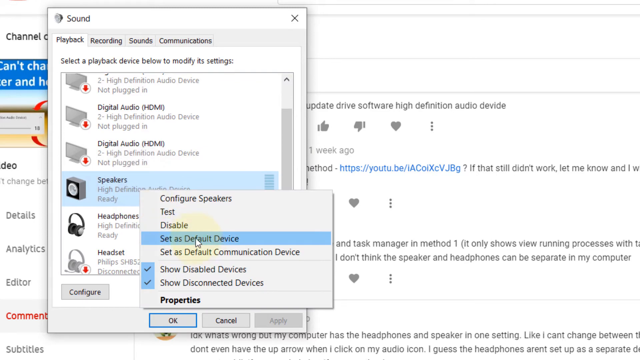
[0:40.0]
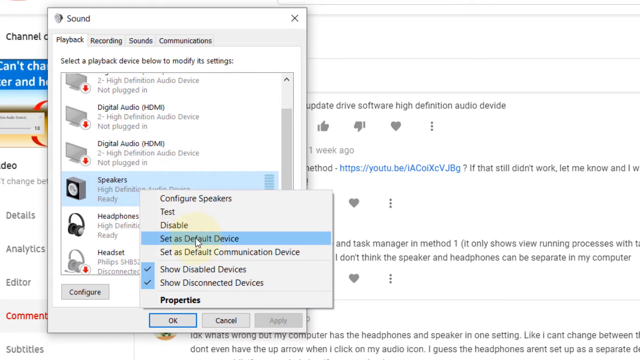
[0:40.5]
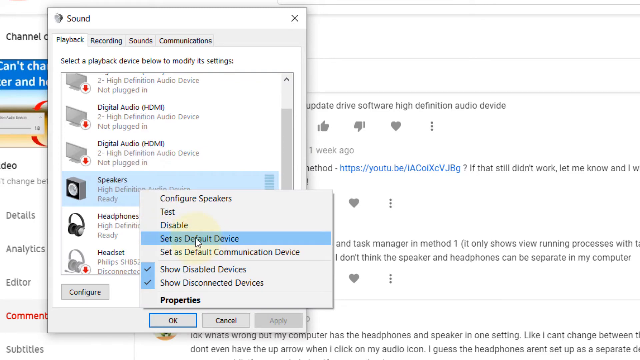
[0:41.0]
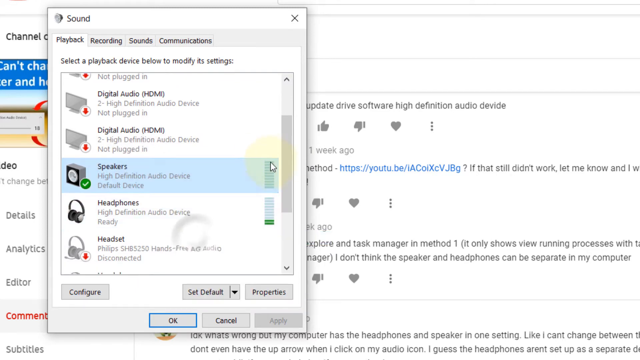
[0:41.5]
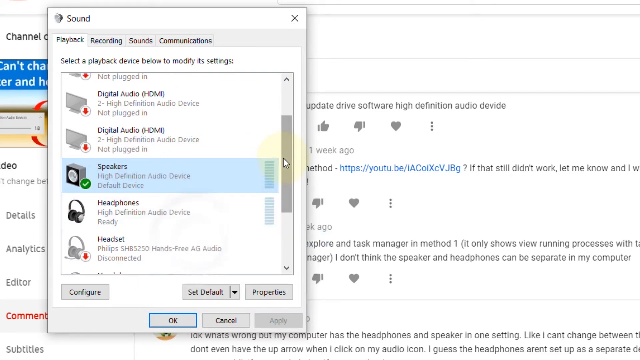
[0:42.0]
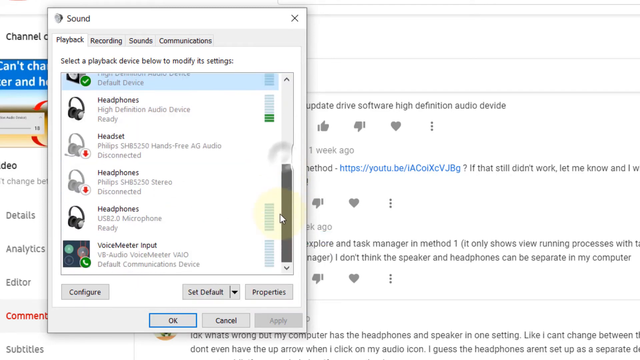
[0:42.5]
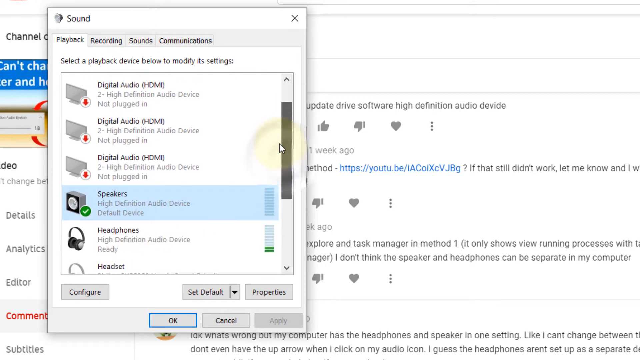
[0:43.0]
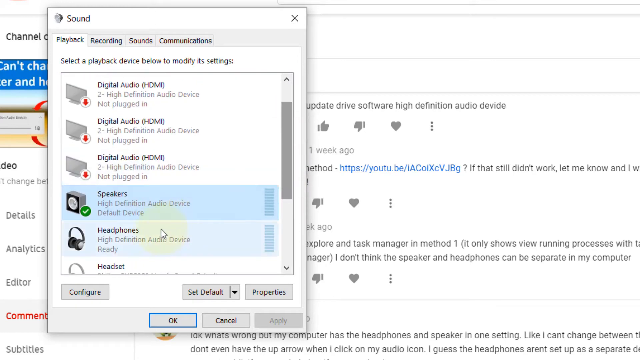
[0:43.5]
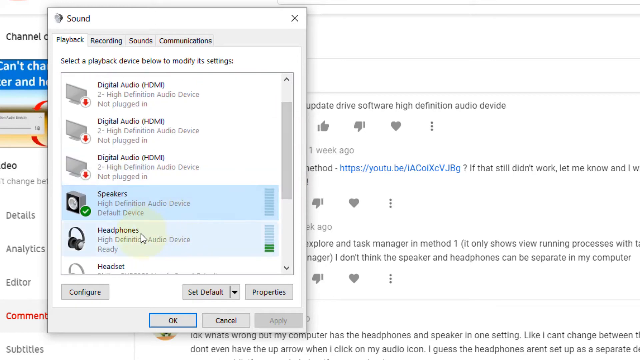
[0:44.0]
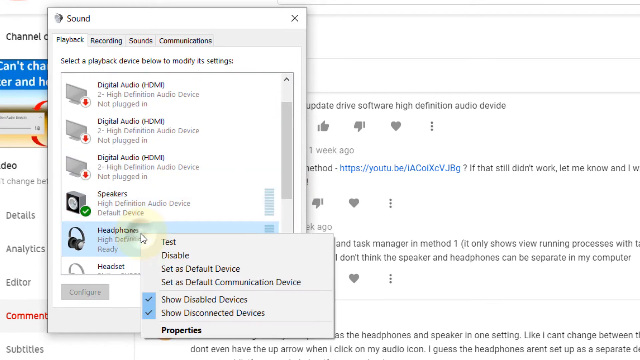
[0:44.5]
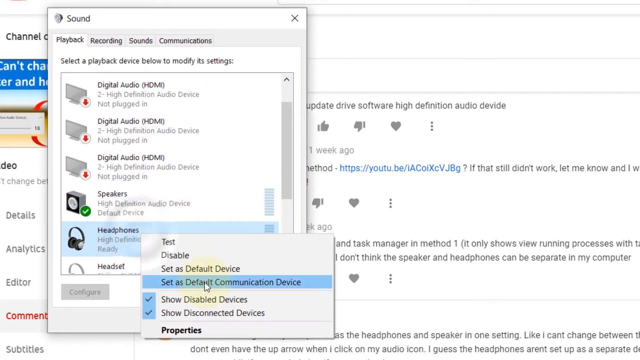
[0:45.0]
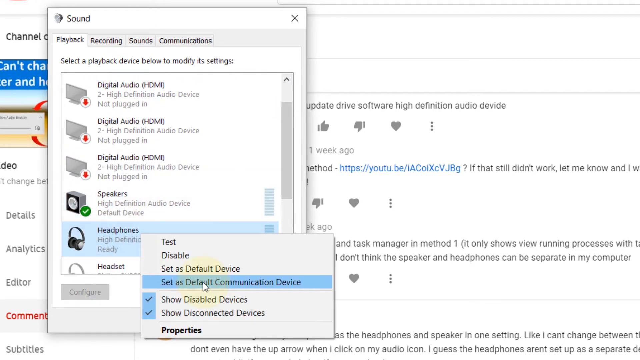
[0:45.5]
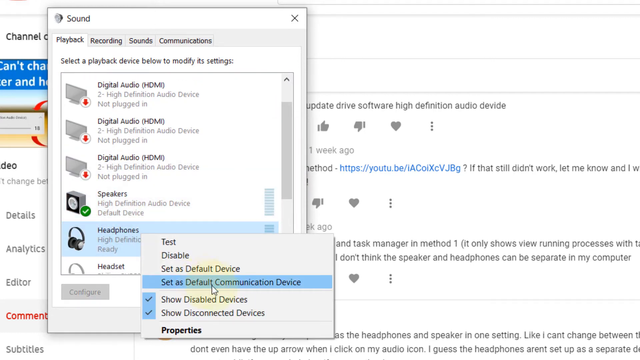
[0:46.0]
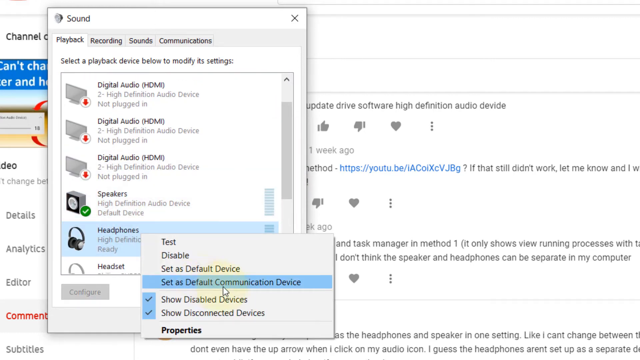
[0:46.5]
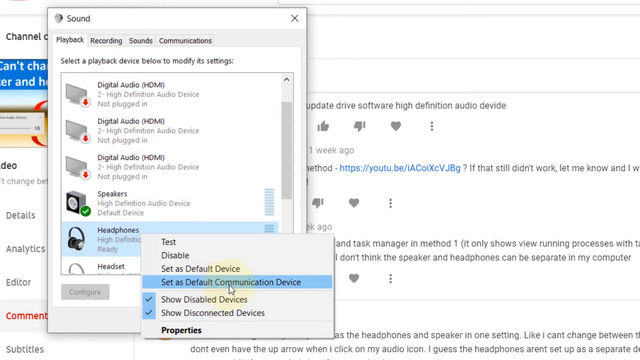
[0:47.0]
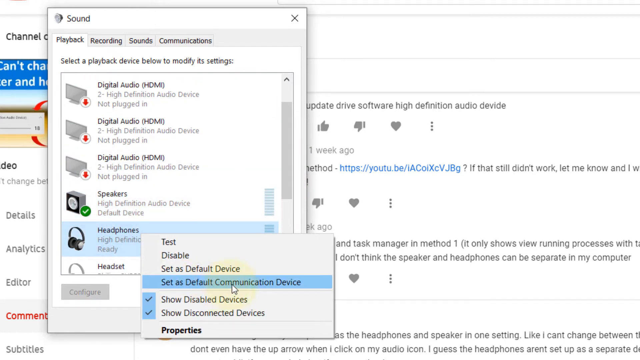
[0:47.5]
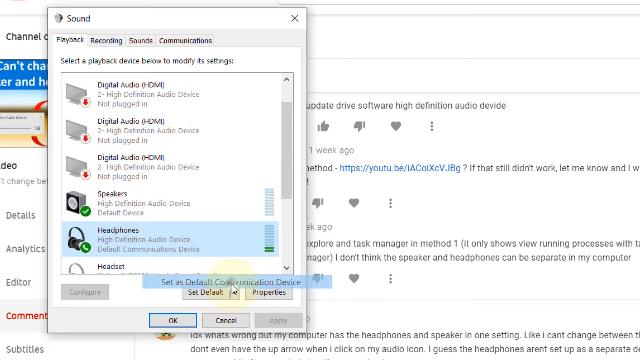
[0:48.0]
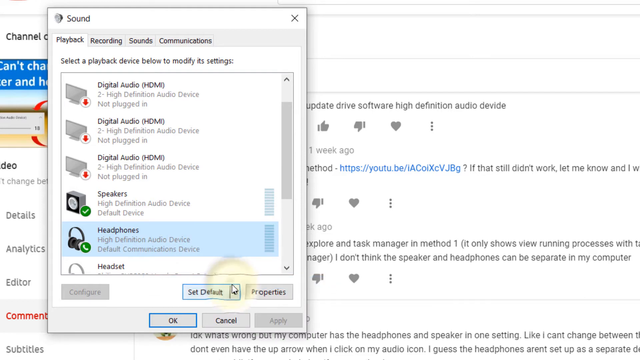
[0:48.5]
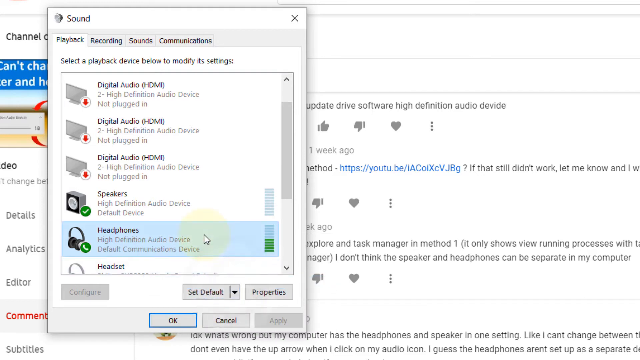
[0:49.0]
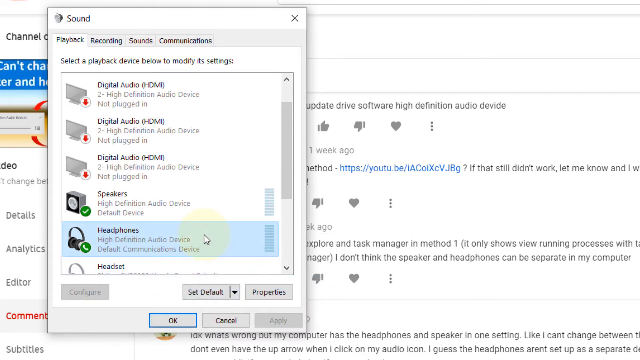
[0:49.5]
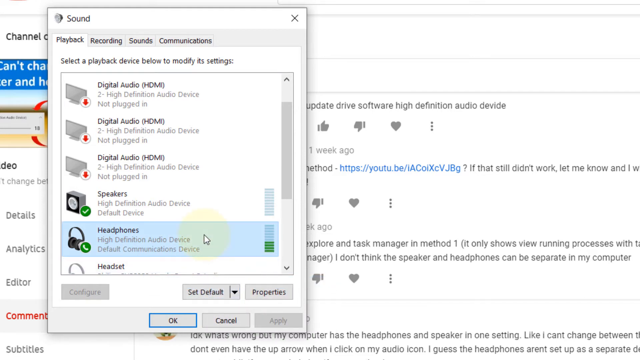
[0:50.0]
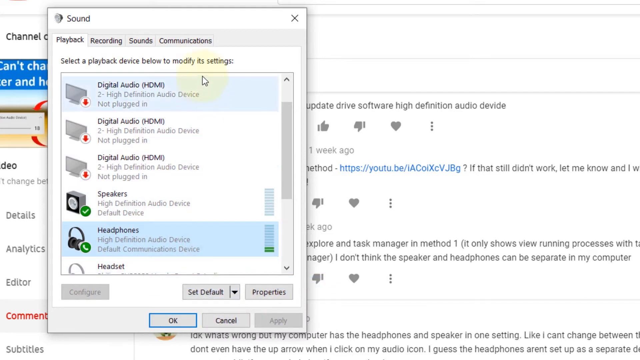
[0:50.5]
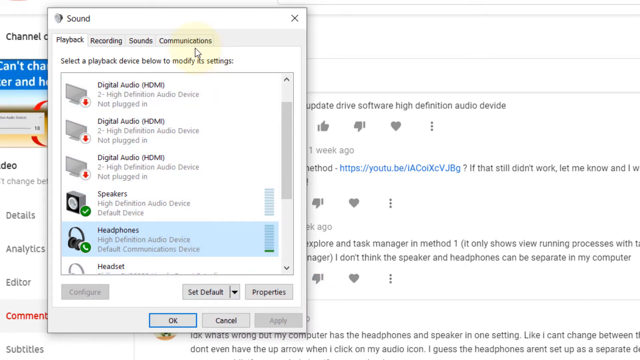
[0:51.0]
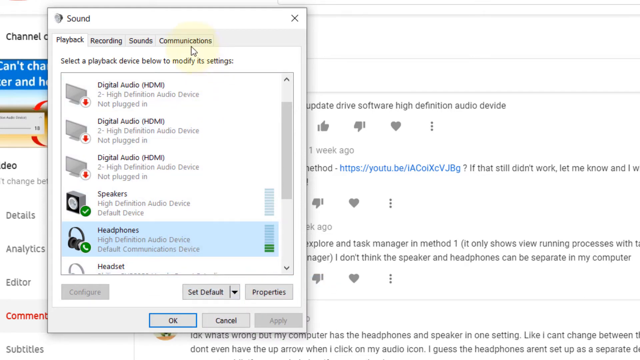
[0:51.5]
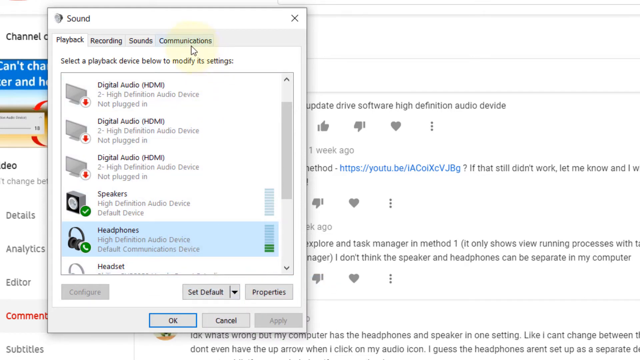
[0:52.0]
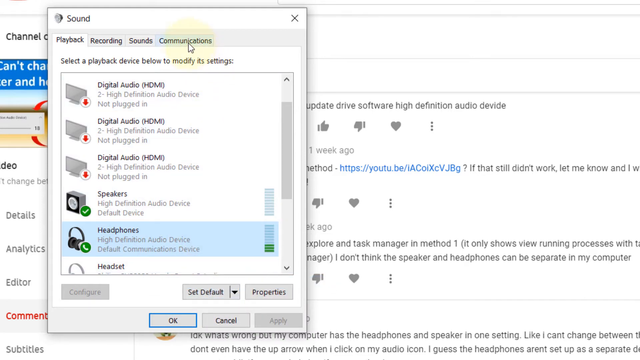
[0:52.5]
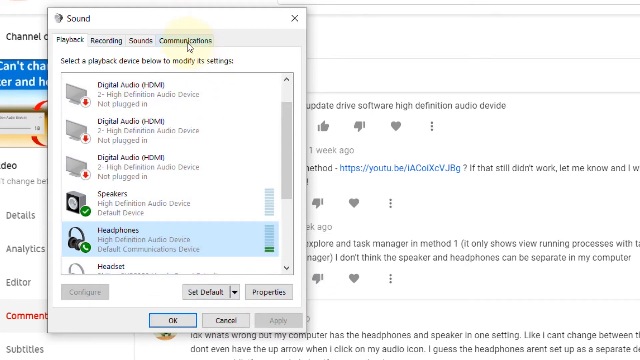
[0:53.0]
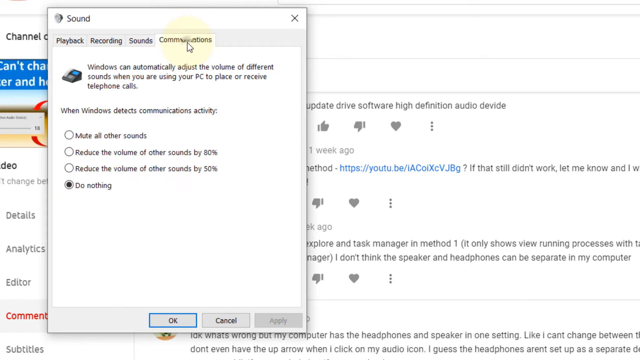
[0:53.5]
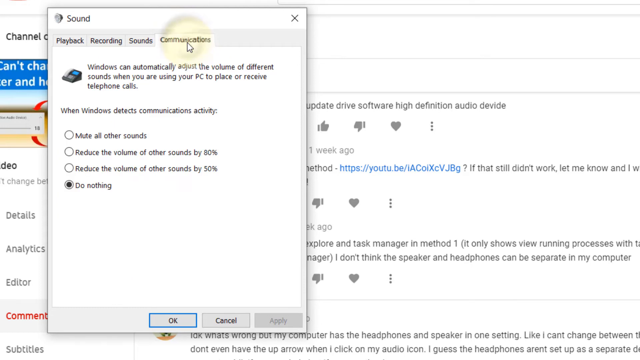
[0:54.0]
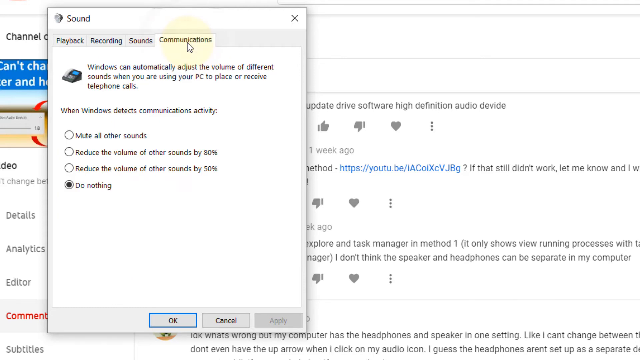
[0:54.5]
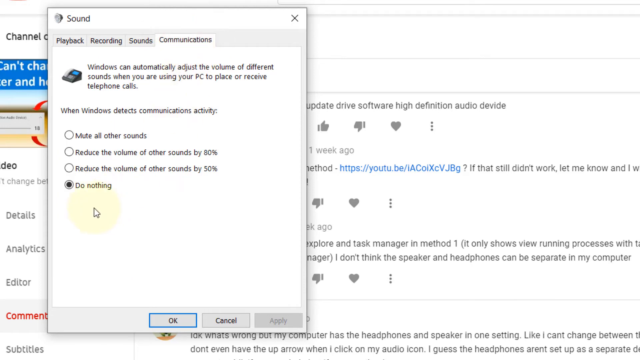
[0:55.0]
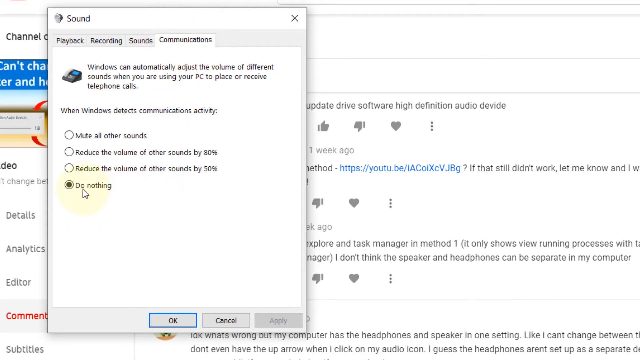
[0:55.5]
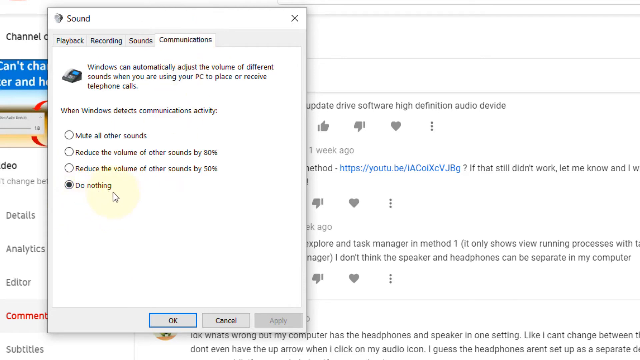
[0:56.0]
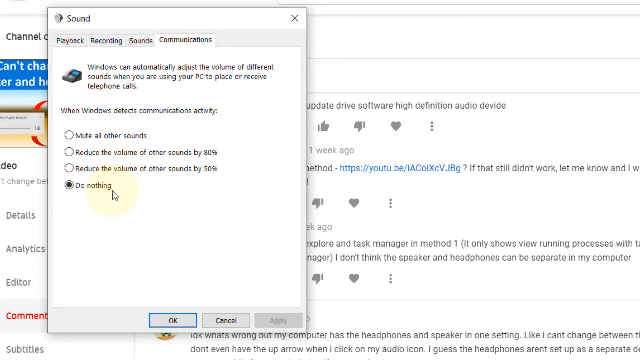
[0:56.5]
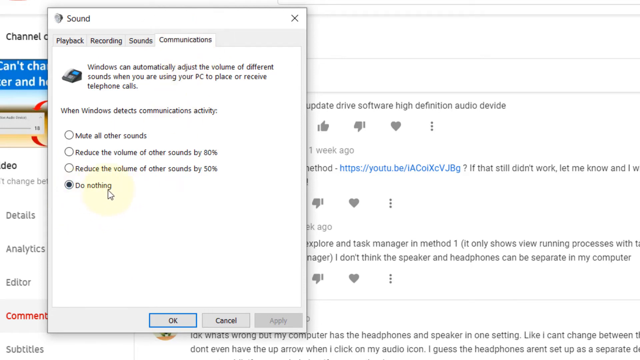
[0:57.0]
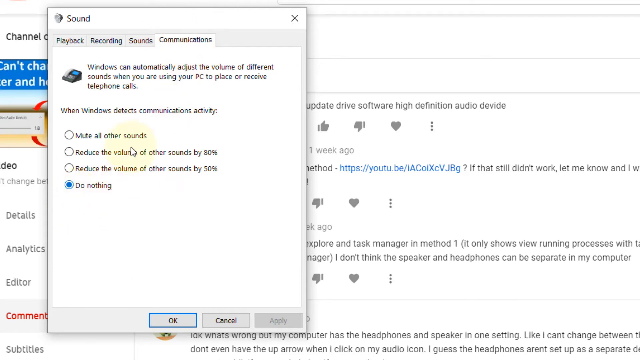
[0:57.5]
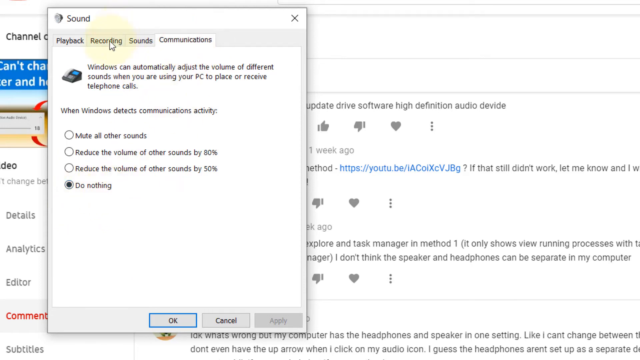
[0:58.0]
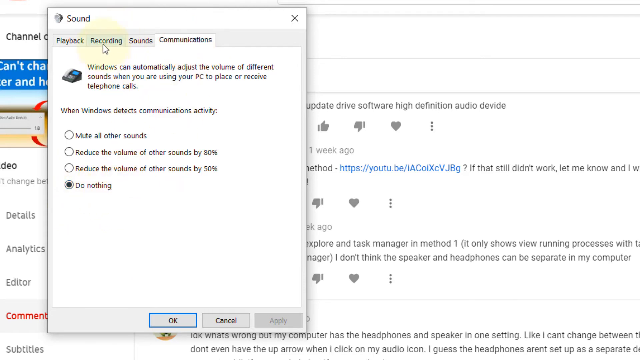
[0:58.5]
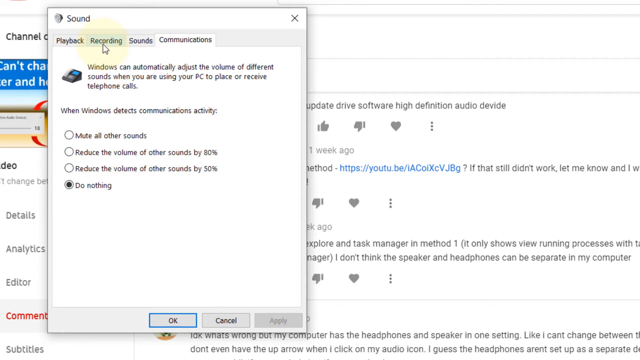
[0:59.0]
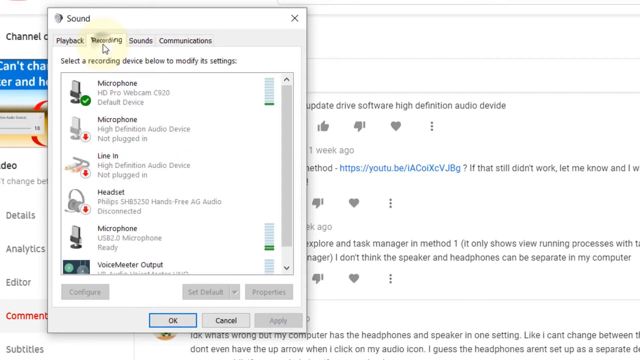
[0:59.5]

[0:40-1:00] After Speakers is chosen, a menu on the side of the option shows other options to pick from. The arrow moves up and down and presses on headphones, which shows the default settings available. The arrow then goes to Communications and outlines the "do nothing" option, which is already selected. Under Communications, text reads "Windows can automatically adjust the volume", and below it are four bullet points, the last of which, "do nothing", is chosen. The arrow then goes to Recording, the second of the four tabs Playback, Recording, Sounds and Communication, and moves up and down, choosing headphones and other options.